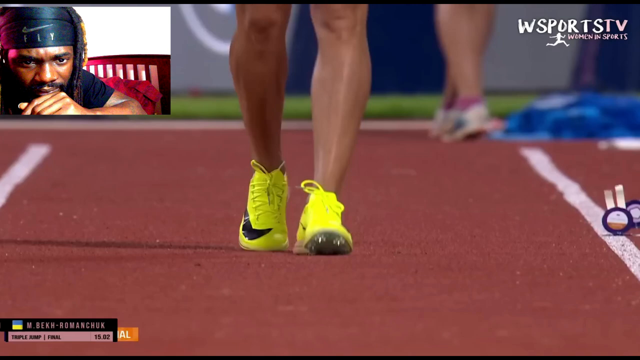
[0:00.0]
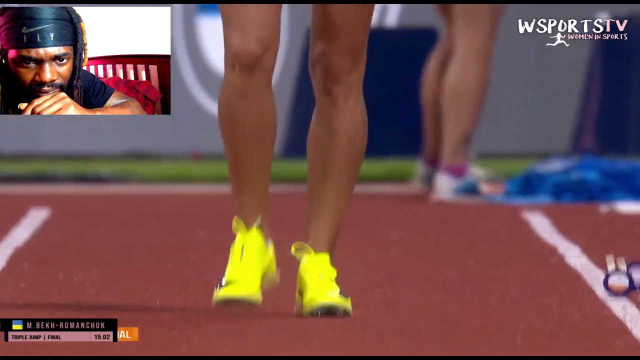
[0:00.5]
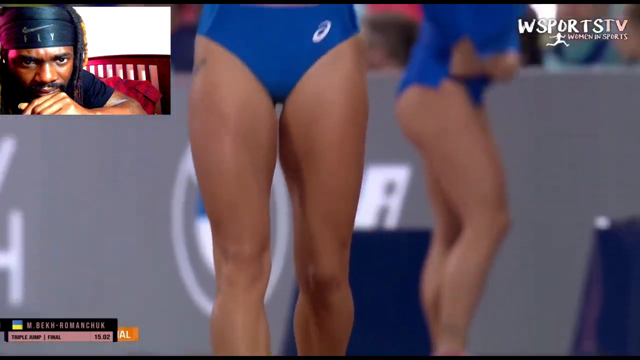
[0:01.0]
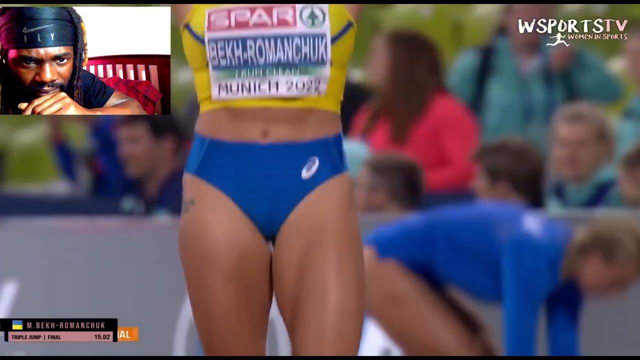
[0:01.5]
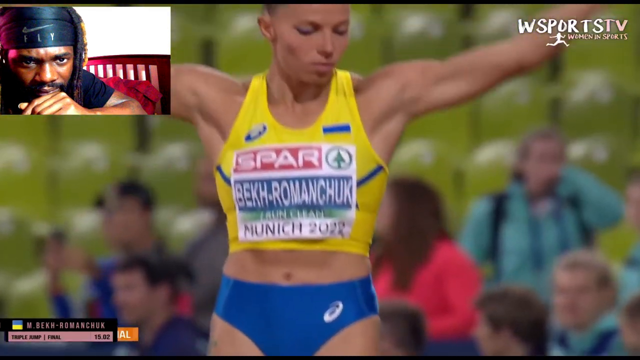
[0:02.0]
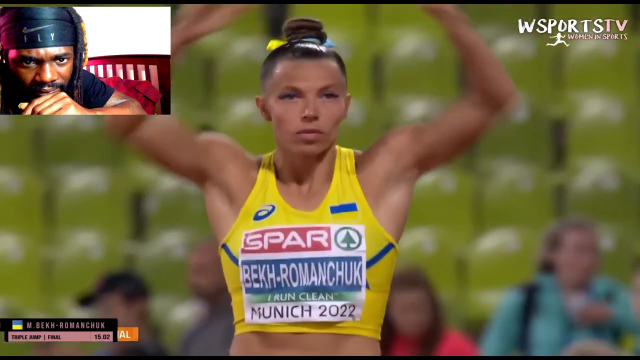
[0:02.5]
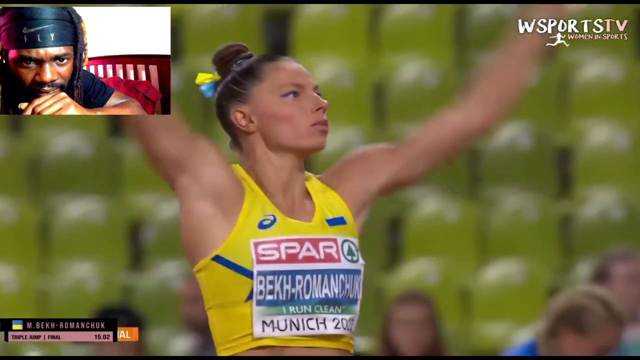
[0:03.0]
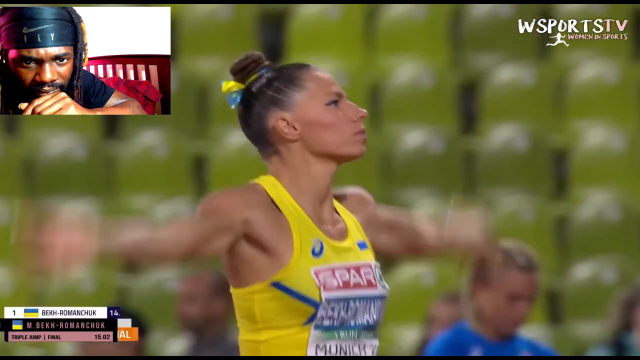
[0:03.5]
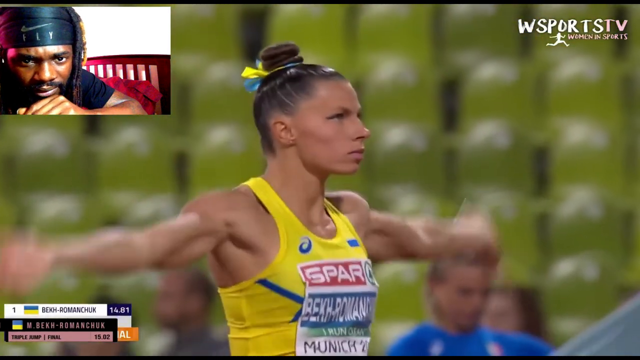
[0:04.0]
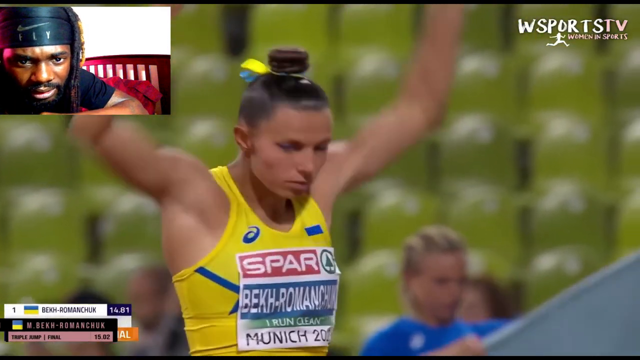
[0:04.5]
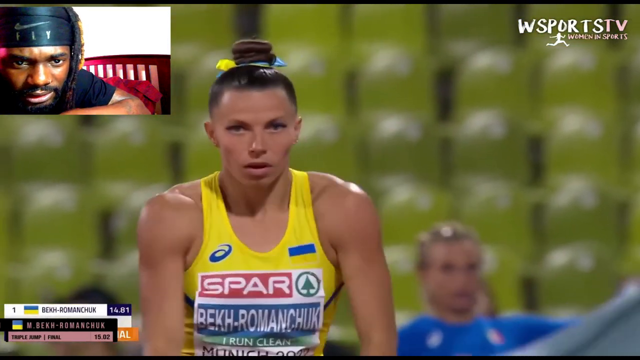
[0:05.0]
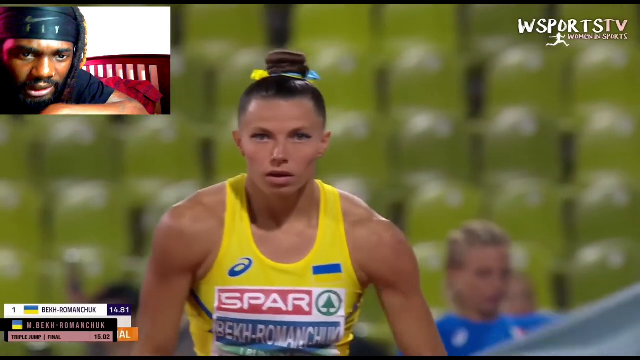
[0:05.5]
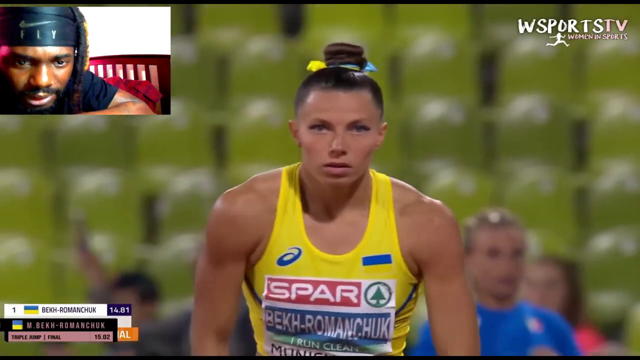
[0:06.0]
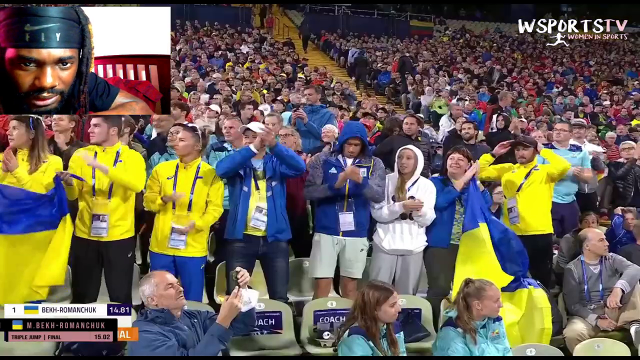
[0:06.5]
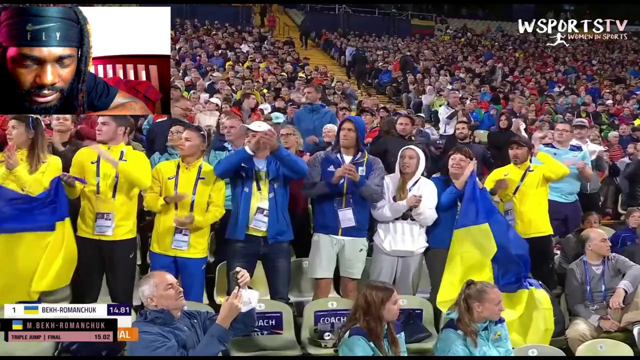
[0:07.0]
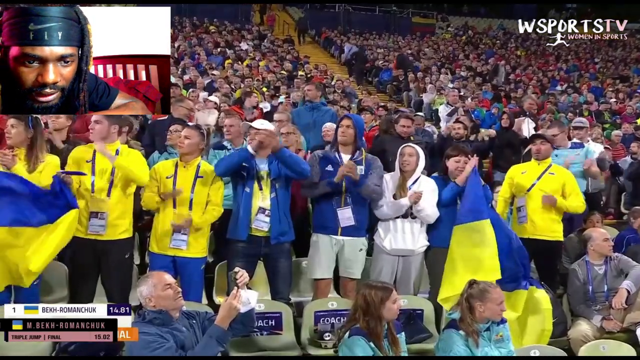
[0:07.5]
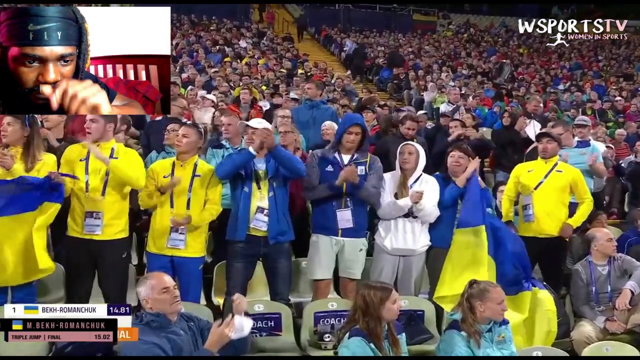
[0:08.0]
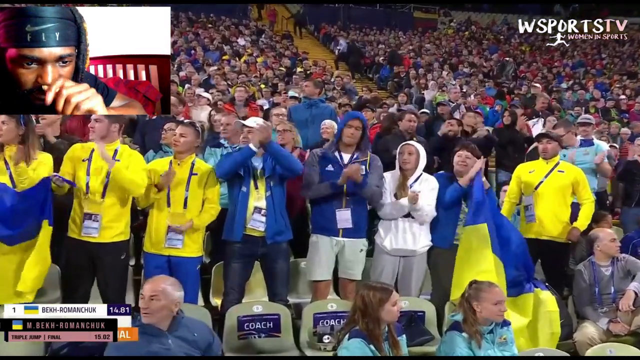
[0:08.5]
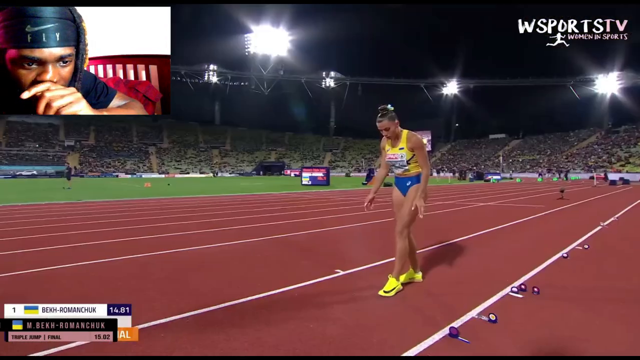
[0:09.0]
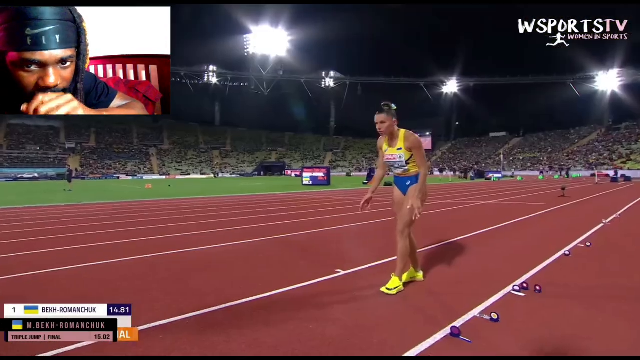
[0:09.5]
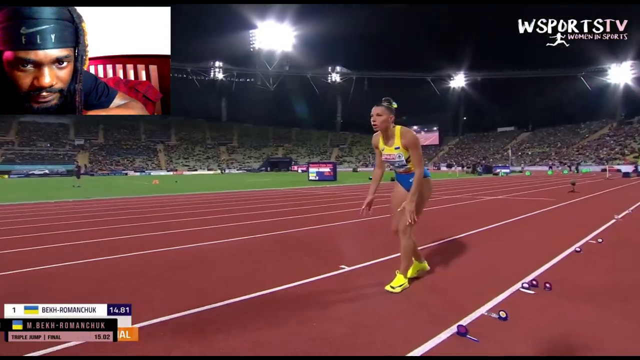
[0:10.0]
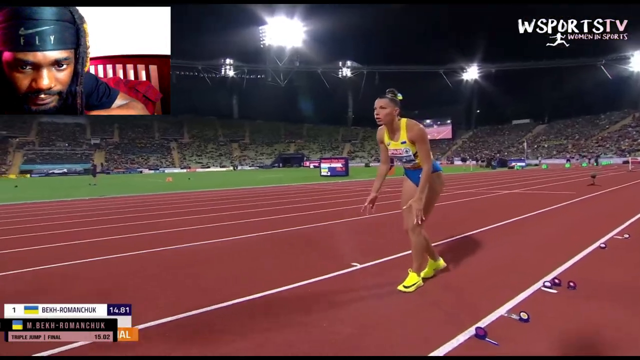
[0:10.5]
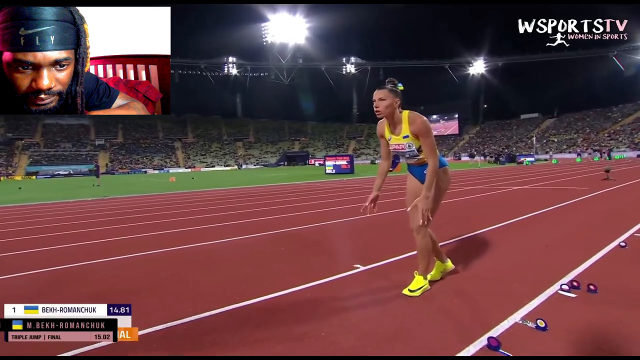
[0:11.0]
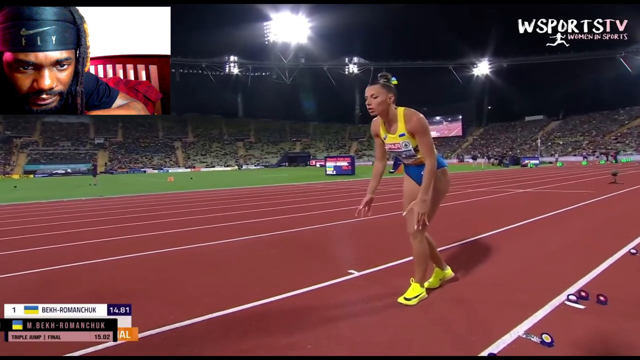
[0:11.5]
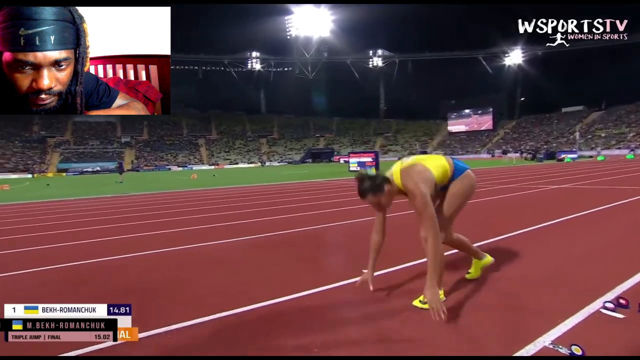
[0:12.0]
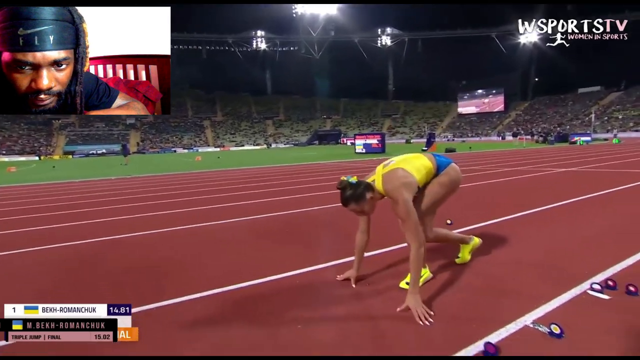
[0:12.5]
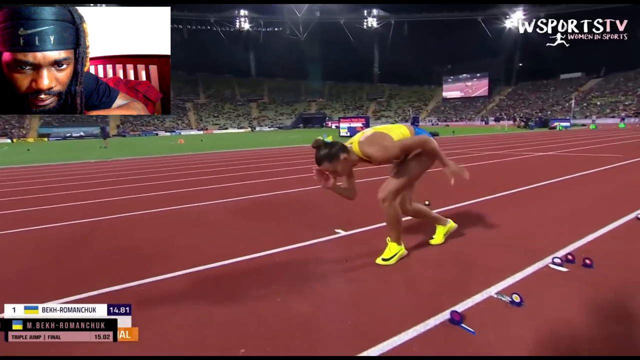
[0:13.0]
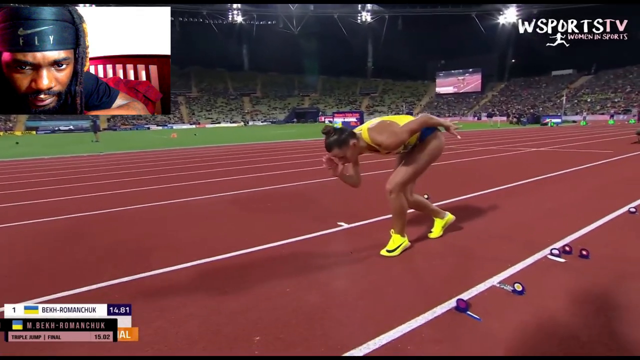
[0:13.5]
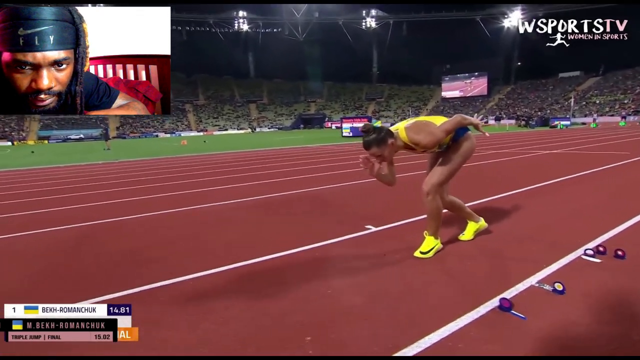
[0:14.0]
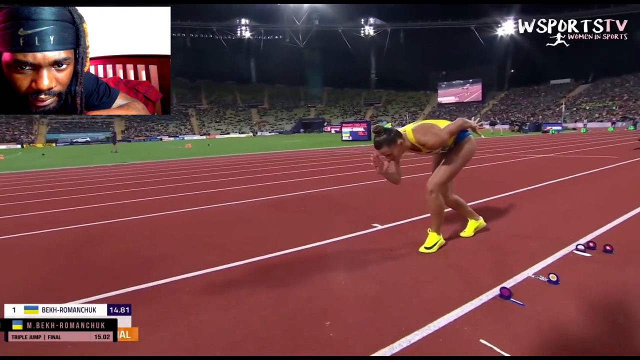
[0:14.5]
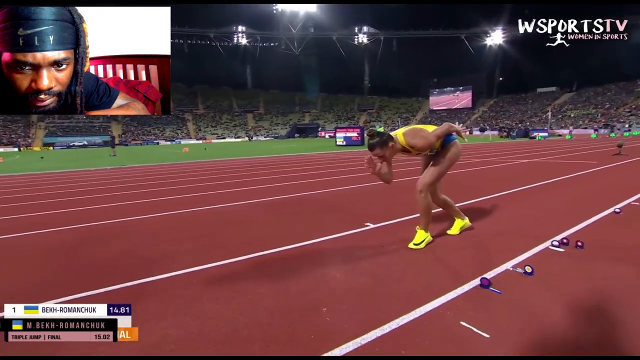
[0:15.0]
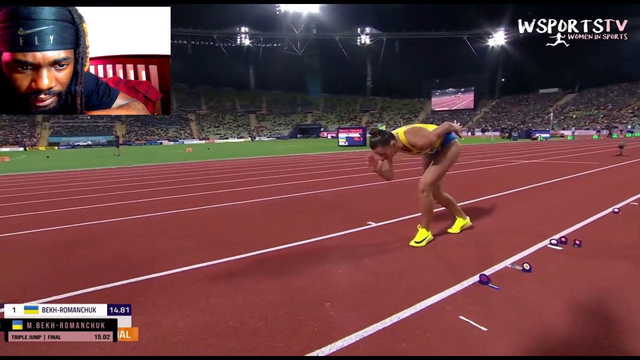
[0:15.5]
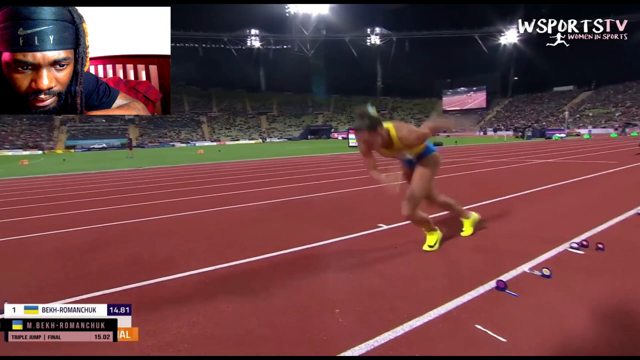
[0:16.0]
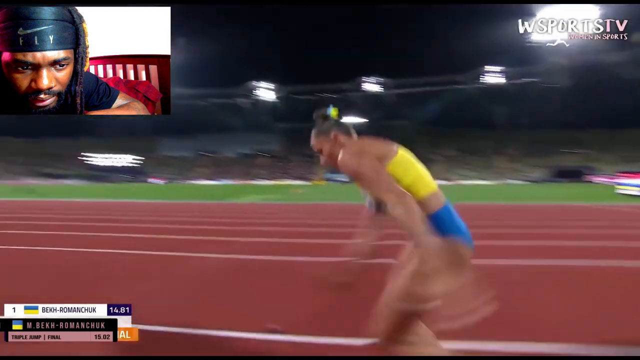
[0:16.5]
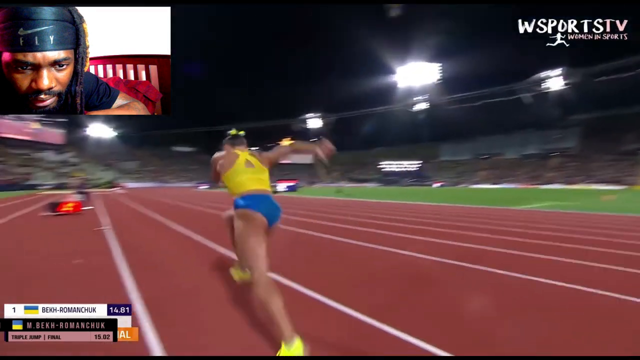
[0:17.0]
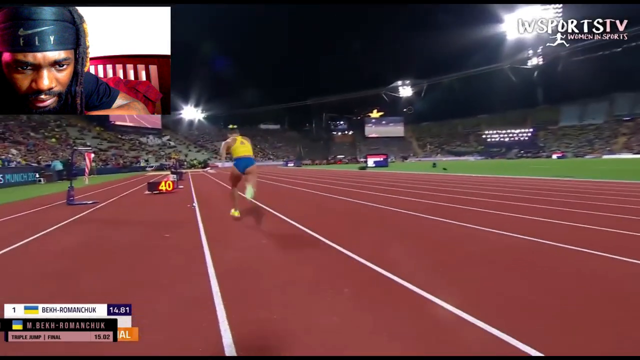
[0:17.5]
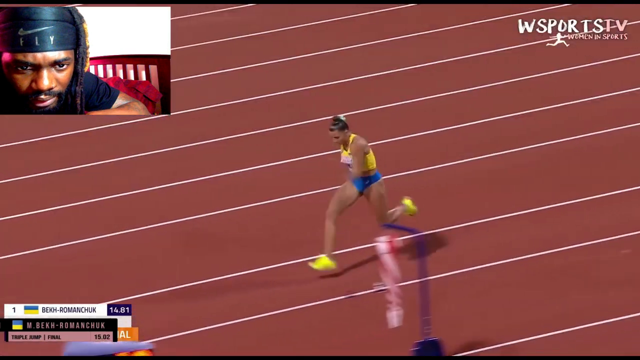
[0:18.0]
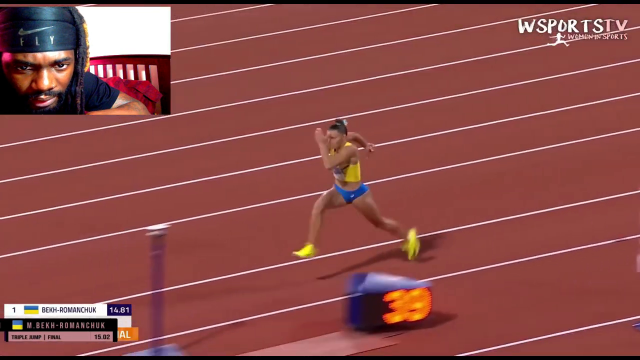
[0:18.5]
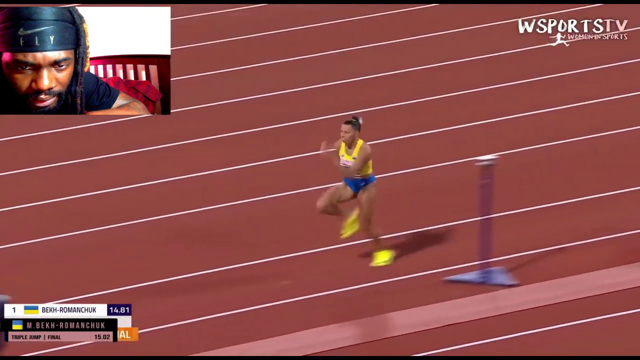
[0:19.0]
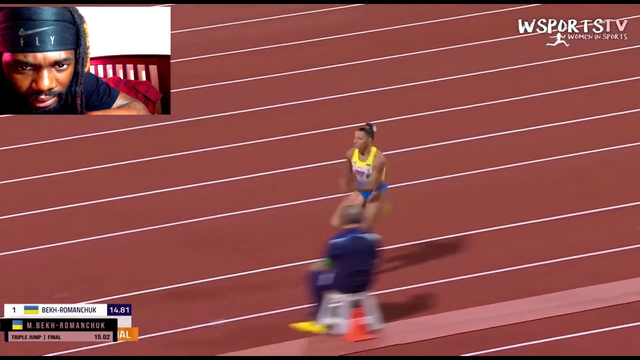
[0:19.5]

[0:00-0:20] A man in the top left corner of the screen reacts to an event. He wears what appears to be a do-rag with what seems to be a Nike swoosh on it, along with the word "fly" in what looks like white text. He watches the event very closely. The event appears to be some kind of meter dash from the Olympics or a sports show, and it looks like women's sports. A woman in a yellow tank top dashes very quickly in a straight line, wearing yellow or neon green shoes with a black Nike swoosh.